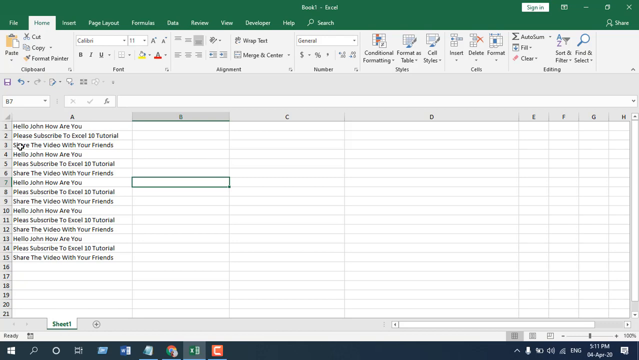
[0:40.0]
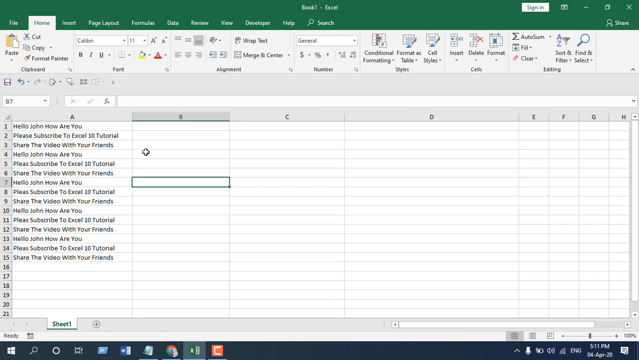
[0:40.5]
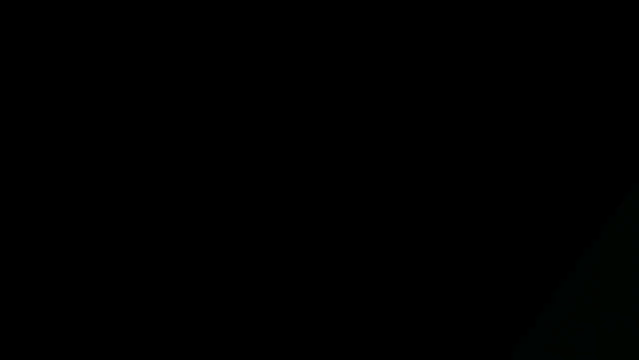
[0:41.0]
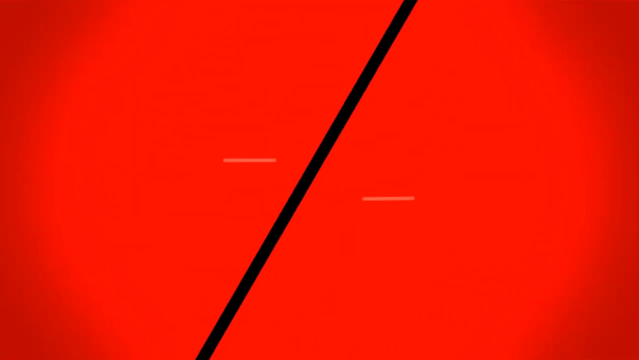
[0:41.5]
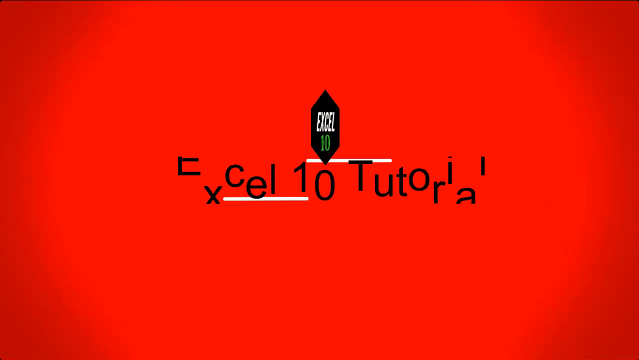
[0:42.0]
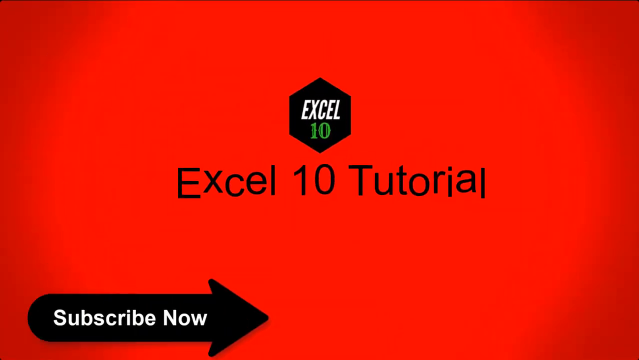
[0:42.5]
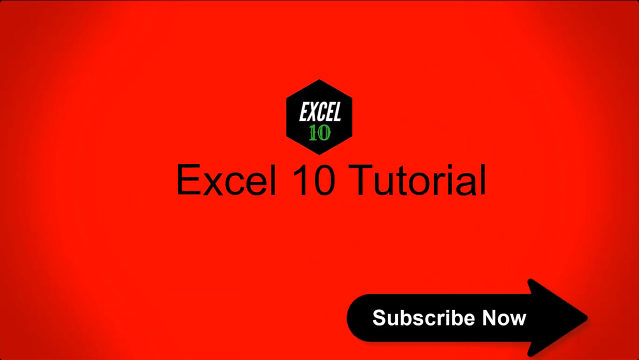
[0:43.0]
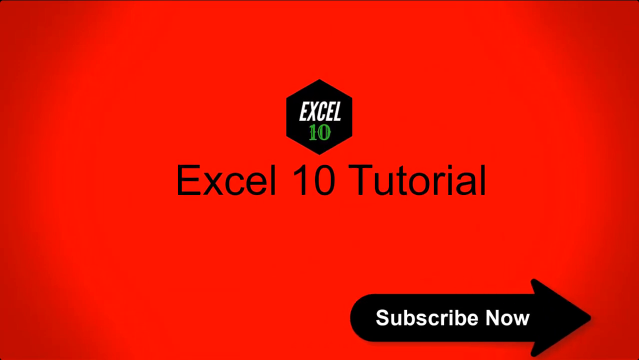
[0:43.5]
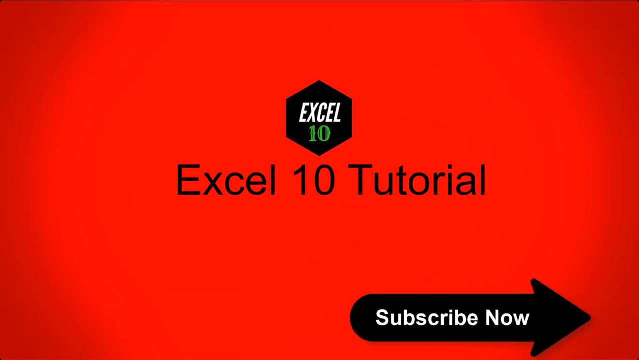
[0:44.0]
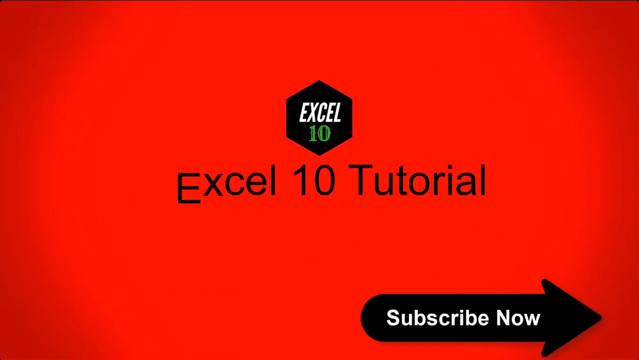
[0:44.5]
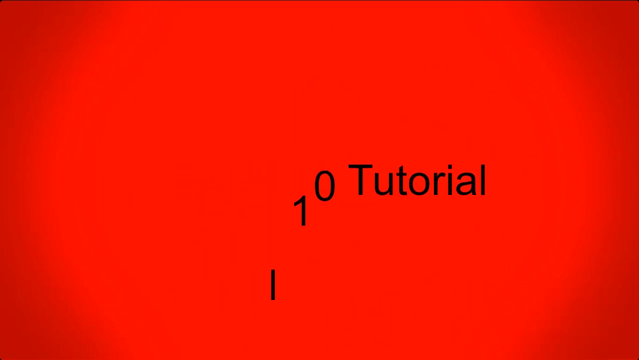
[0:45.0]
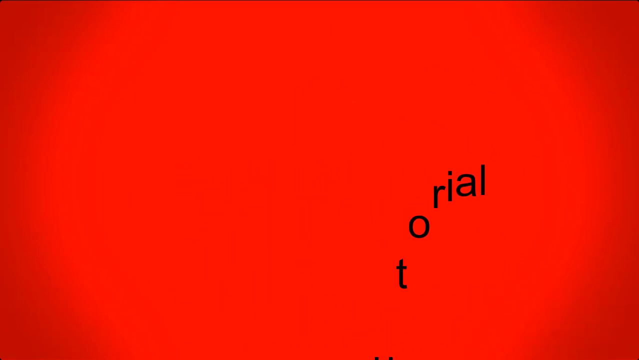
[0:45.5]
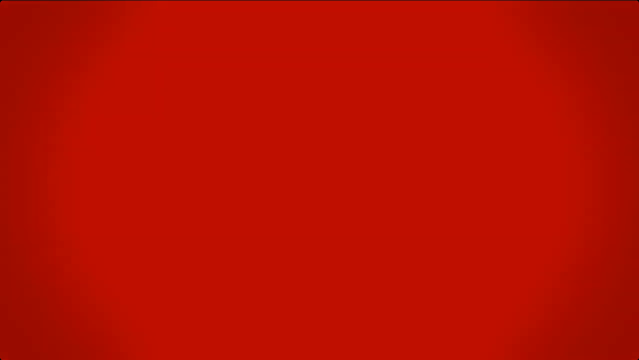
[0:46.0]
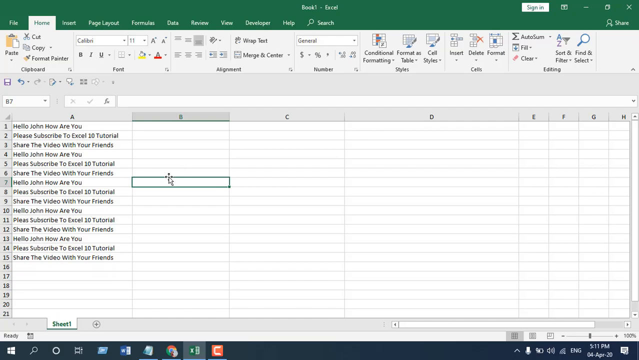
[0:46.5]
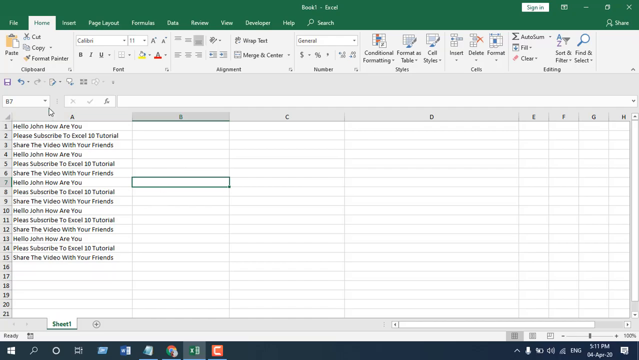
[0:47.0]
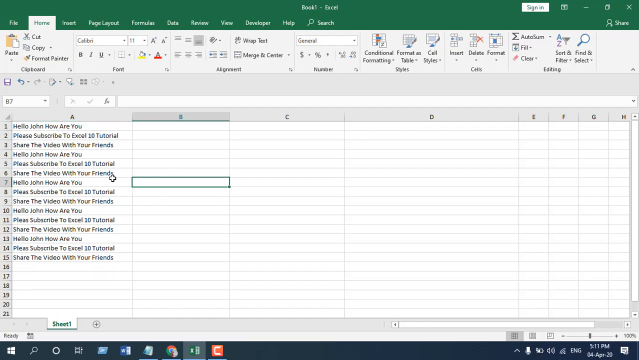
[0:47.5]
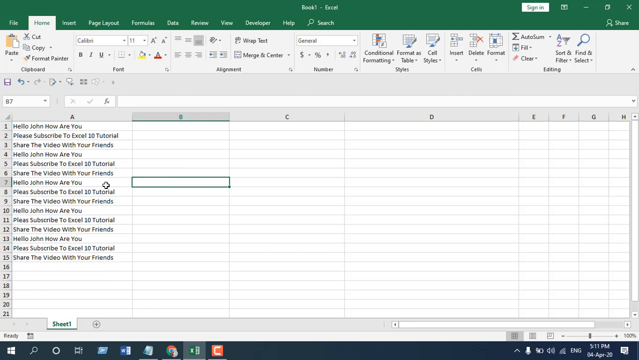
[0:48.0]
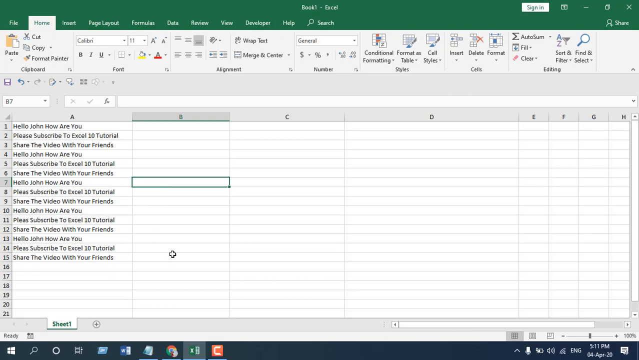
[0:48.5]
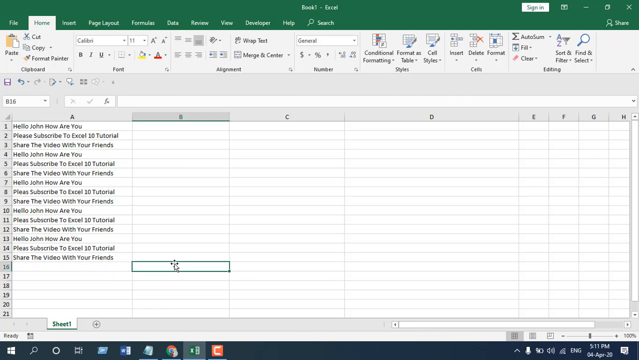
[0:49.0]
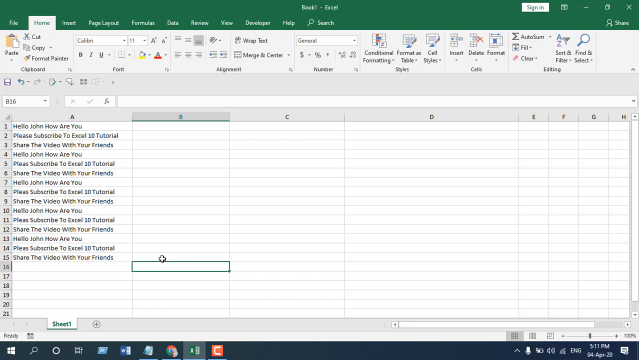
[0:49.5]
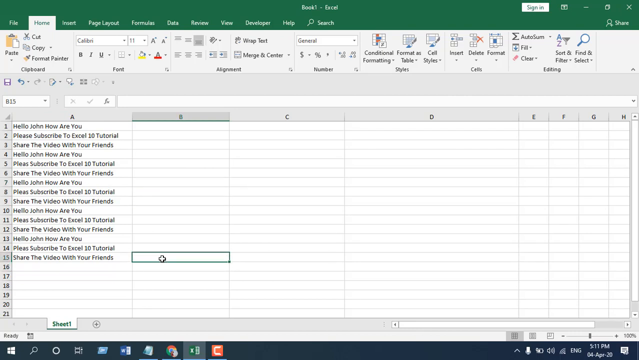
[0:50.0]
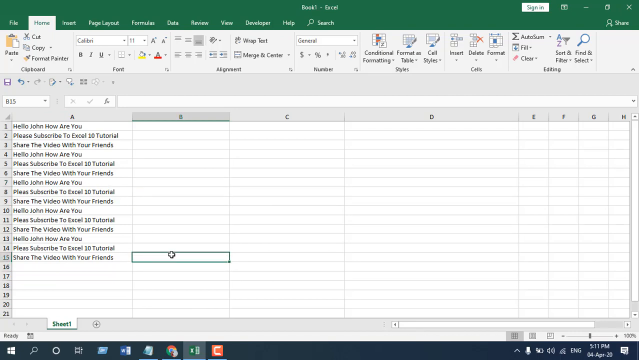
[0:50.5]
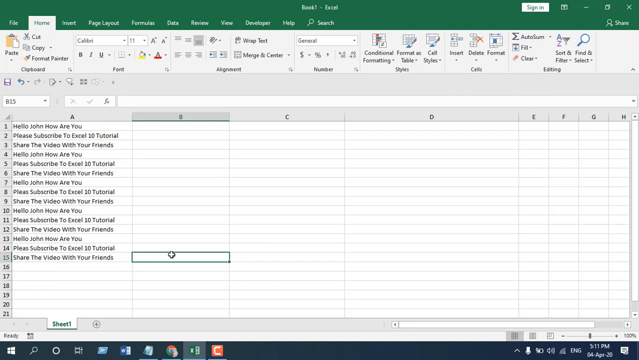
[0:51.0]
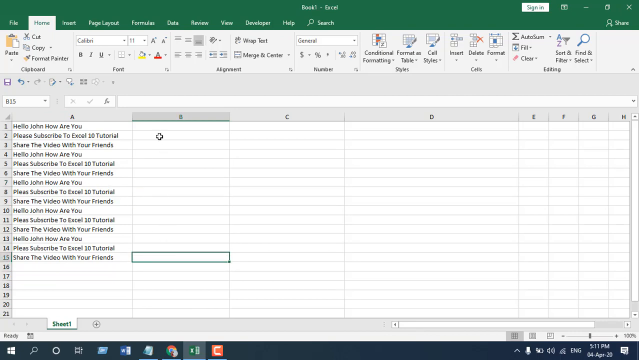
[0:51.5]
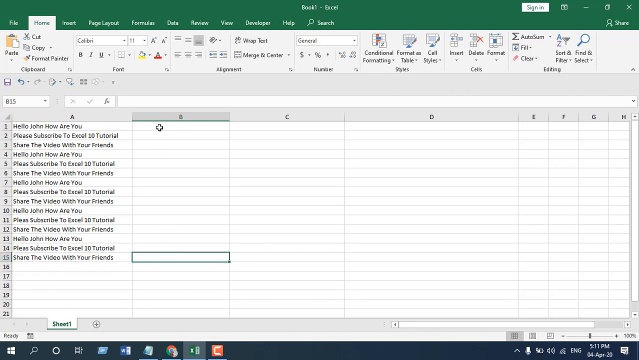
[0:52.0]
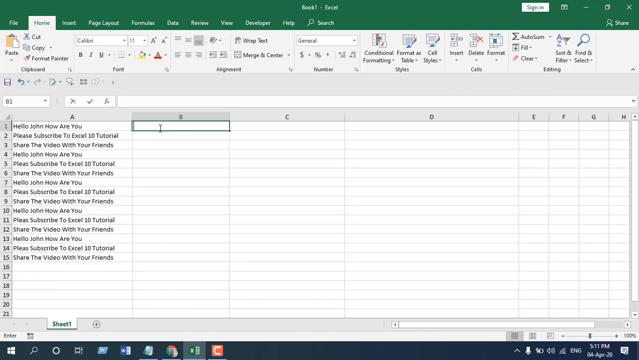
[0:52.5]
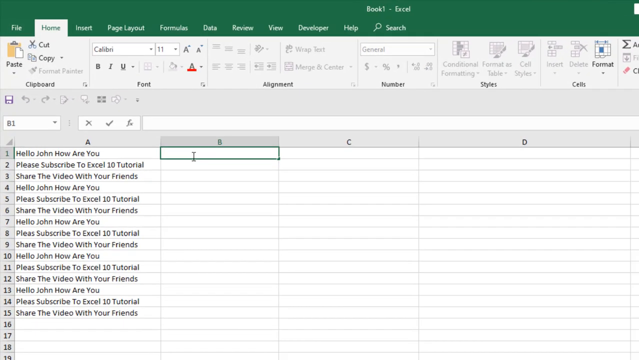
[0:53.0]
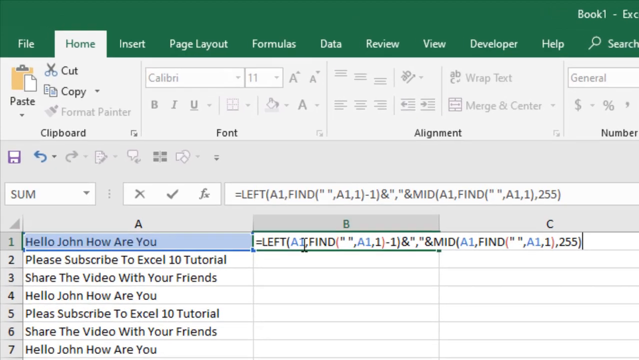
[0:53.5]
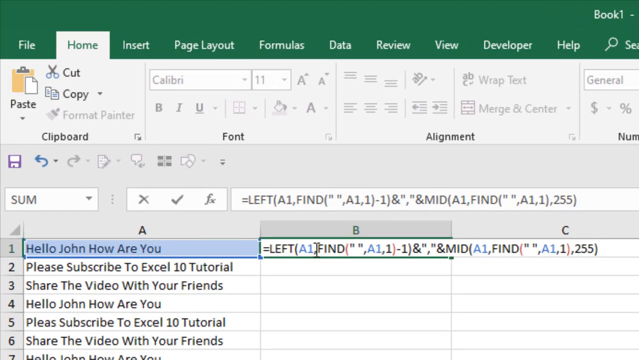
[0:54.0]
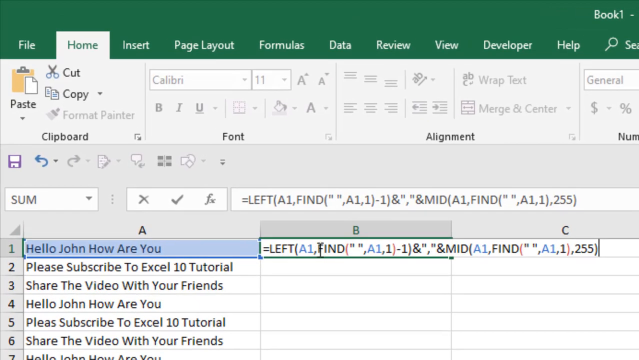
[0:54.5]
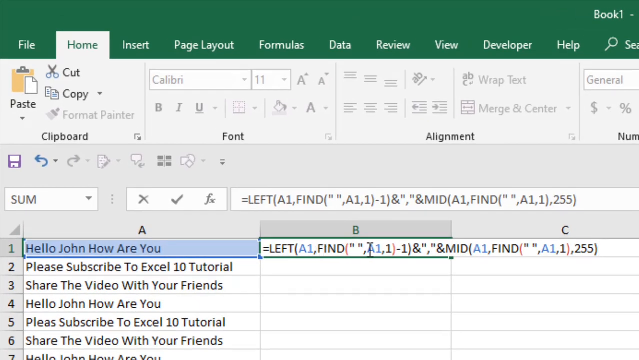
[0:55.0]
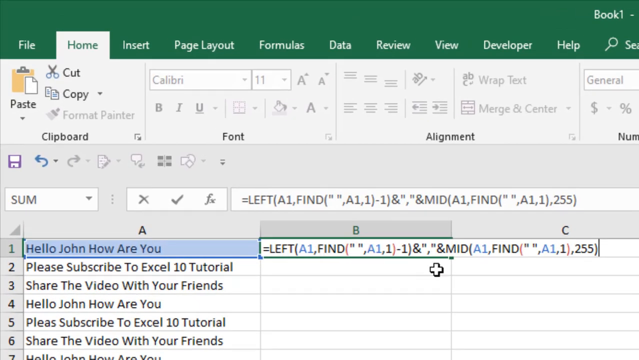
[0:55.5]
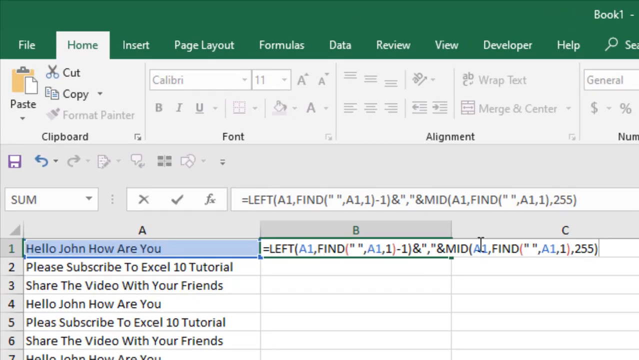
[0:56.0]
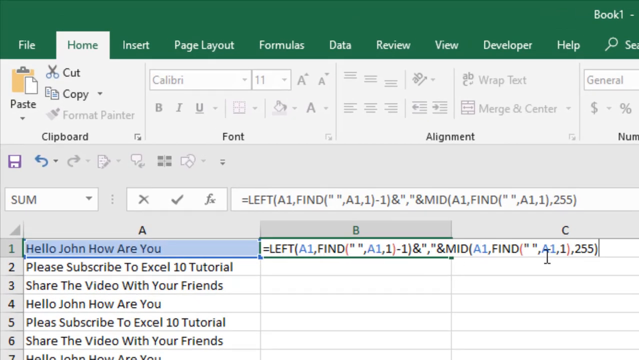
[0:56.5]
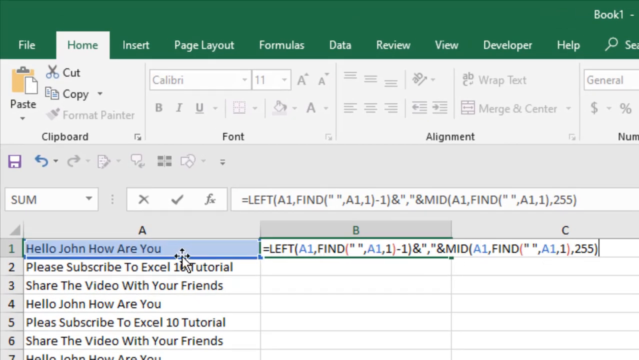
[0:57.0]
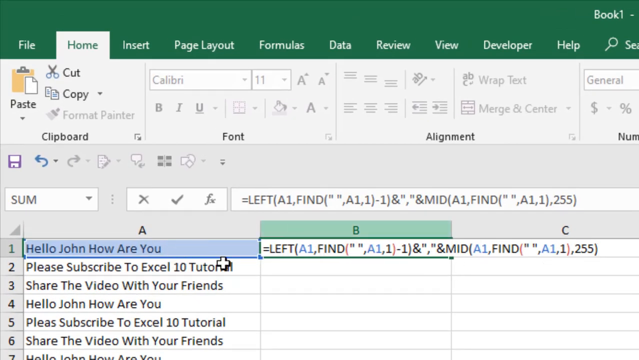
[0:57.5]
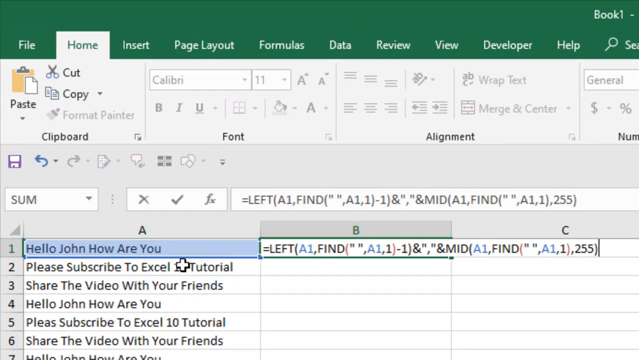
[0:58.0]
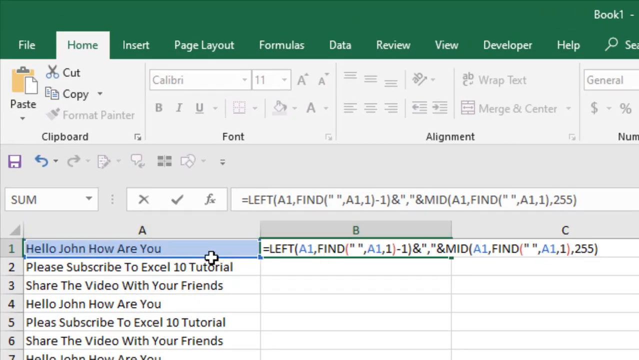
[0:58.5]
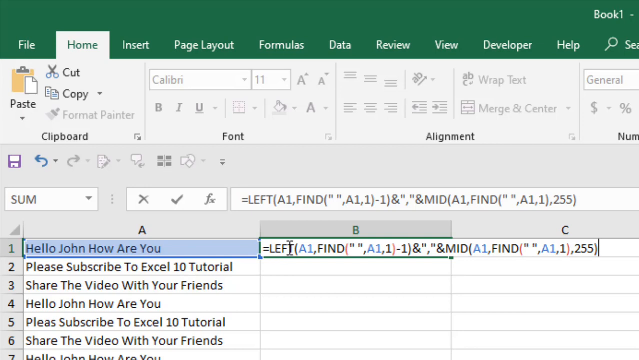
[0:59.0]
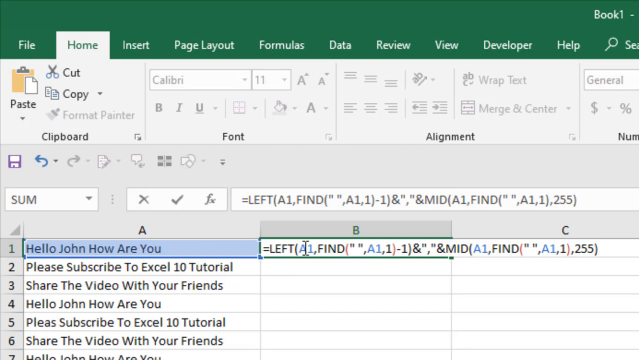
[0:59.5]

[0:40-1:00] An intro sequence plays: a red, almost curtain-like animation closes in on the video. Then a logo for Excel 10 appears, along with the text "Excel 10 Tutorial". At the bottom right is a black arrow icon that says "Subscribe Now", with an oval shape on its left and a pointy arrow on its right side. The video then returns to the Excel sheet and zooms in on A1 again. What appears to be the raw data for the cell pops up on the right, with text such as "equals left A1 find".